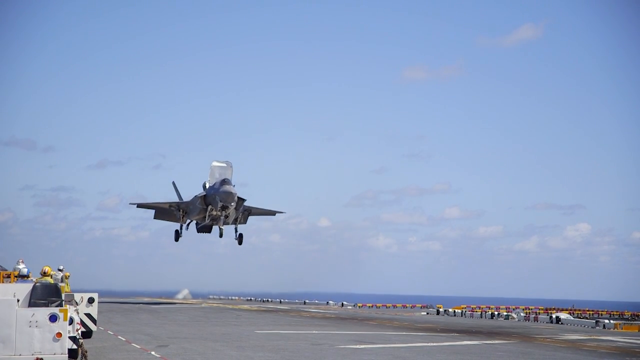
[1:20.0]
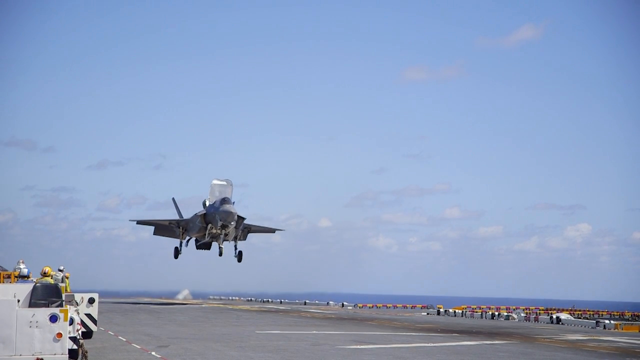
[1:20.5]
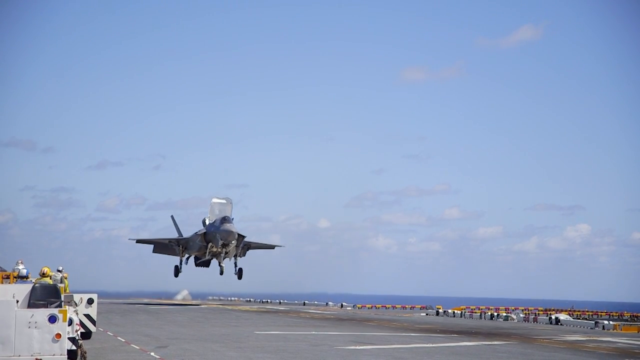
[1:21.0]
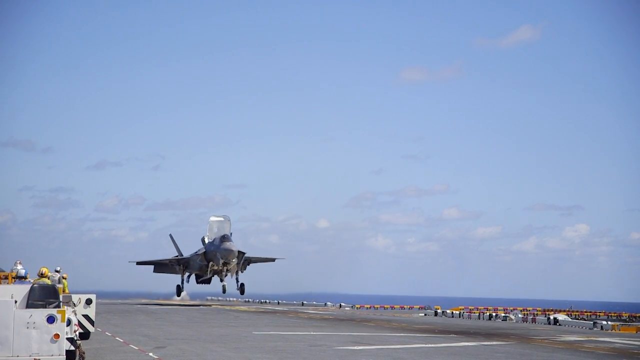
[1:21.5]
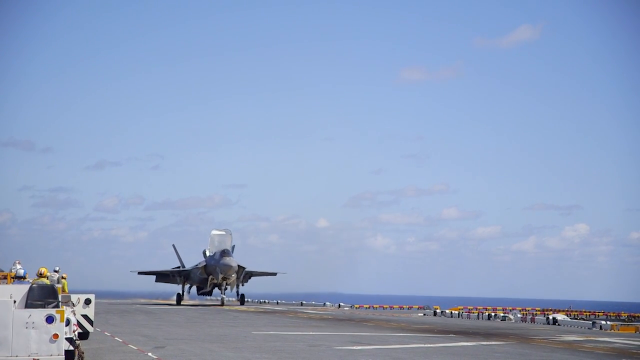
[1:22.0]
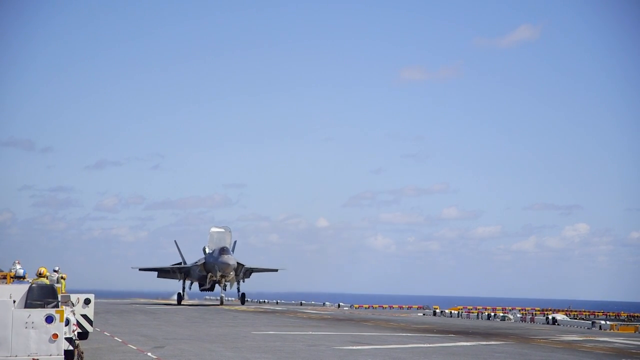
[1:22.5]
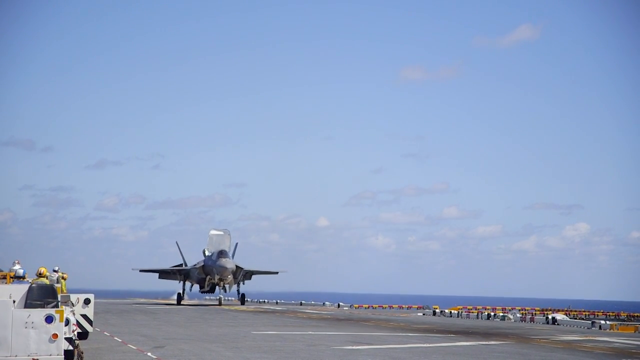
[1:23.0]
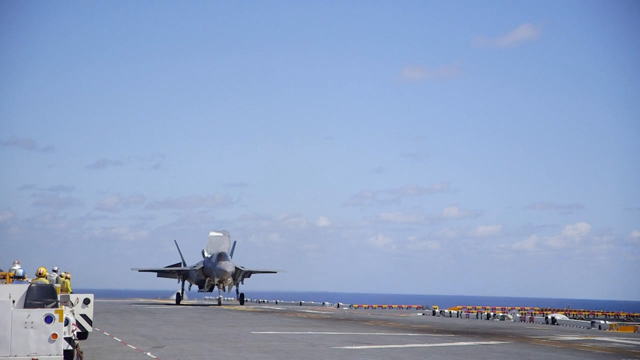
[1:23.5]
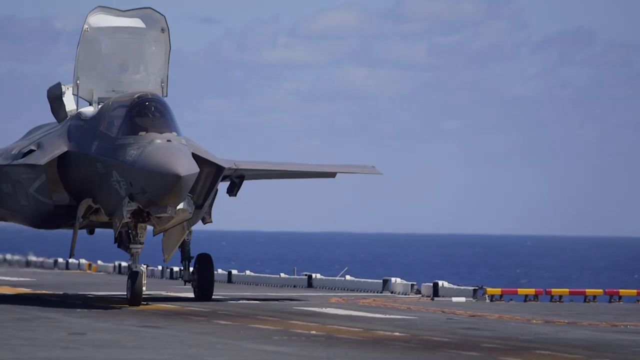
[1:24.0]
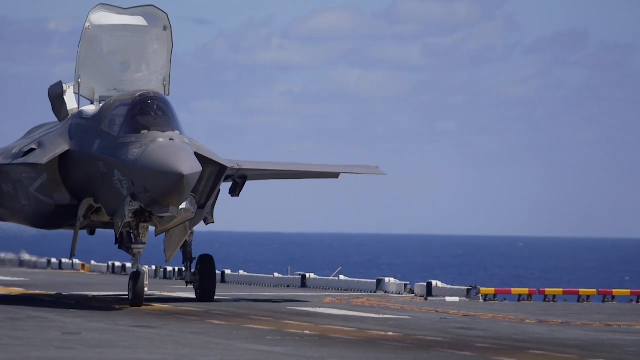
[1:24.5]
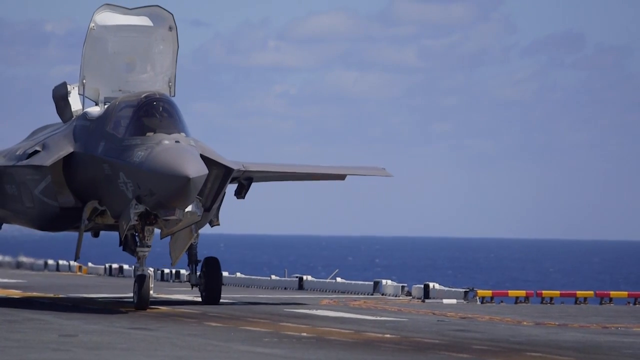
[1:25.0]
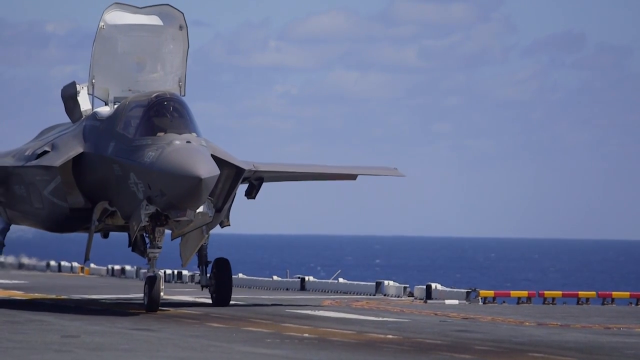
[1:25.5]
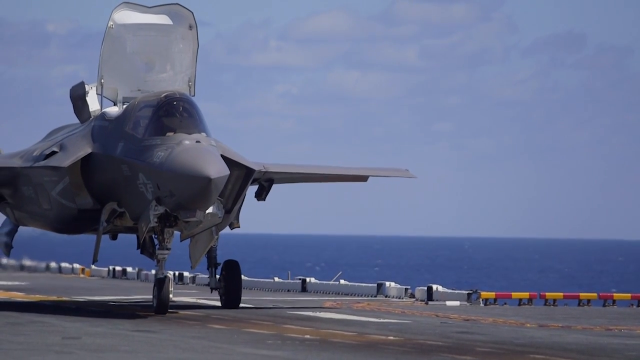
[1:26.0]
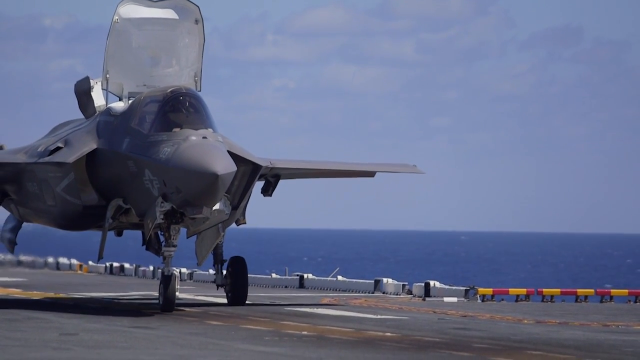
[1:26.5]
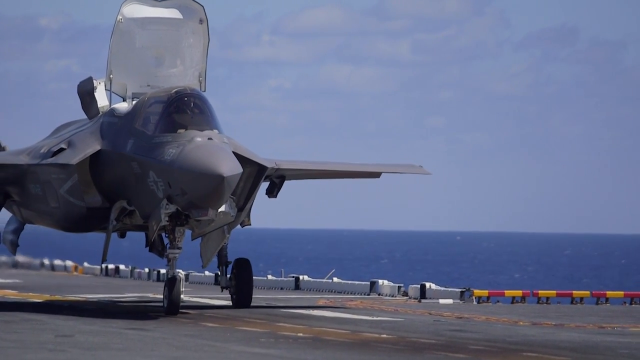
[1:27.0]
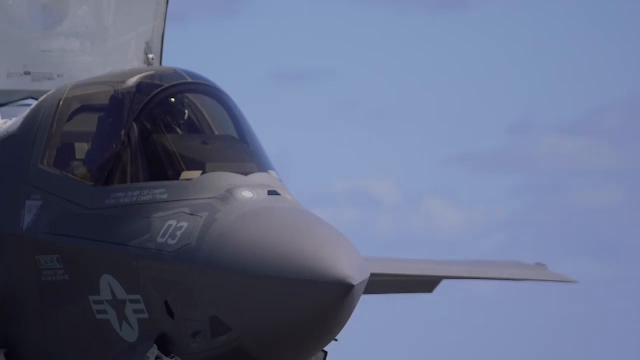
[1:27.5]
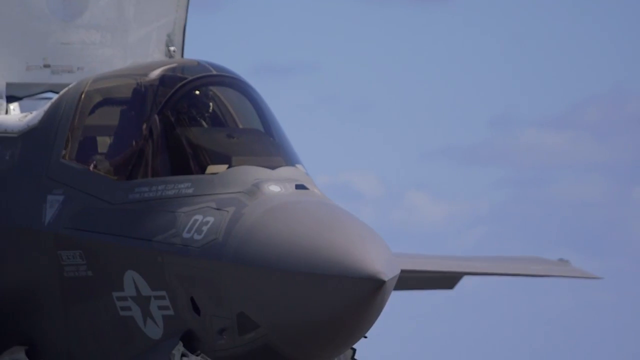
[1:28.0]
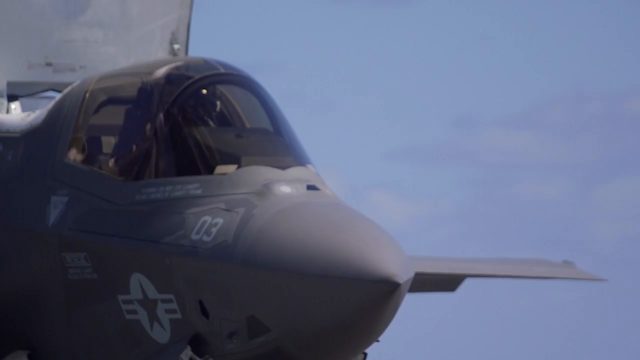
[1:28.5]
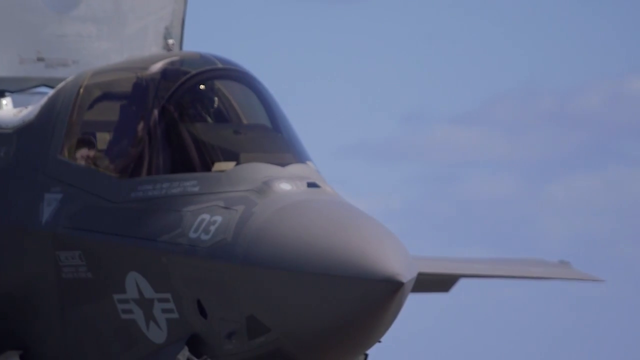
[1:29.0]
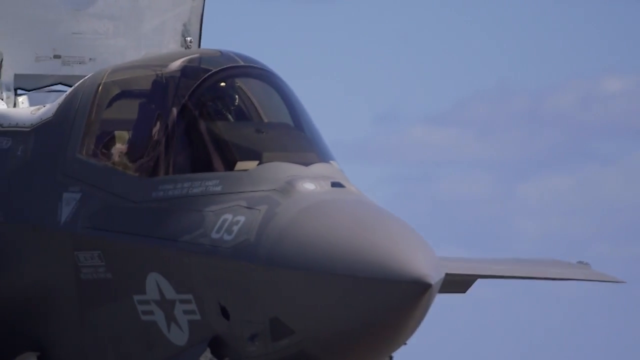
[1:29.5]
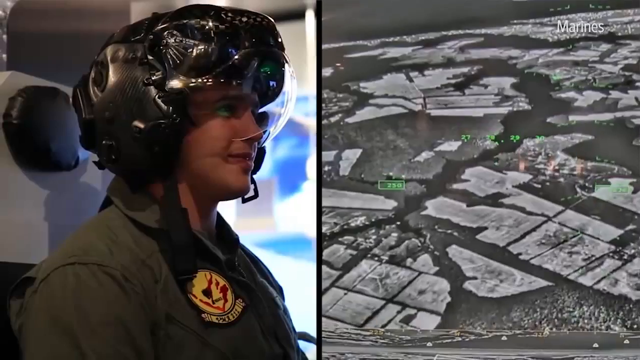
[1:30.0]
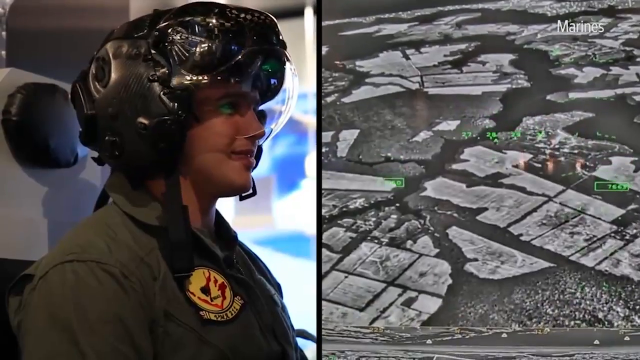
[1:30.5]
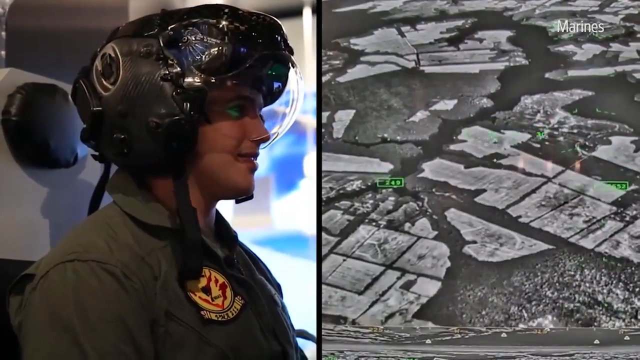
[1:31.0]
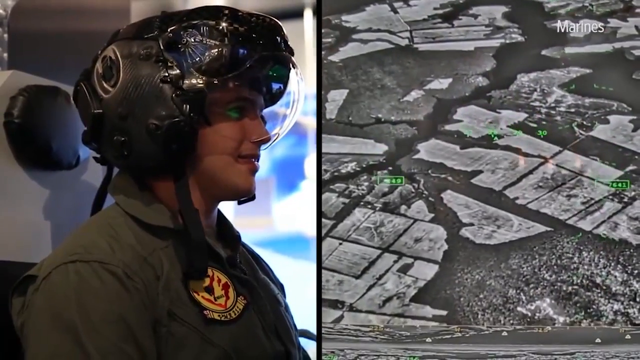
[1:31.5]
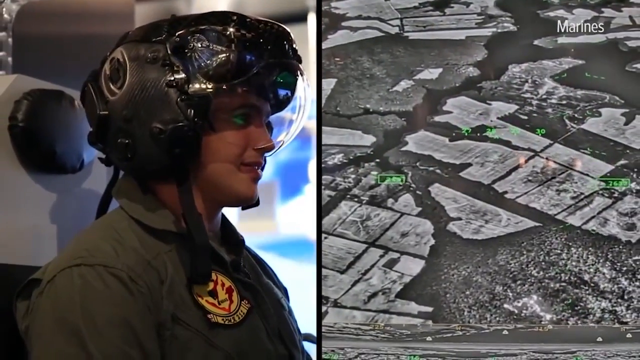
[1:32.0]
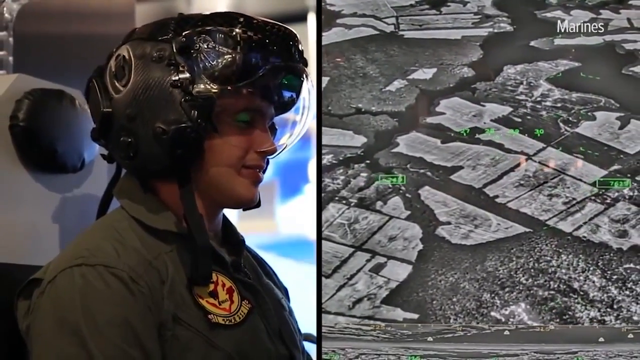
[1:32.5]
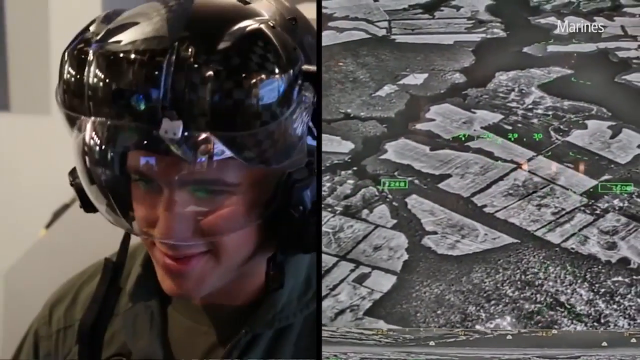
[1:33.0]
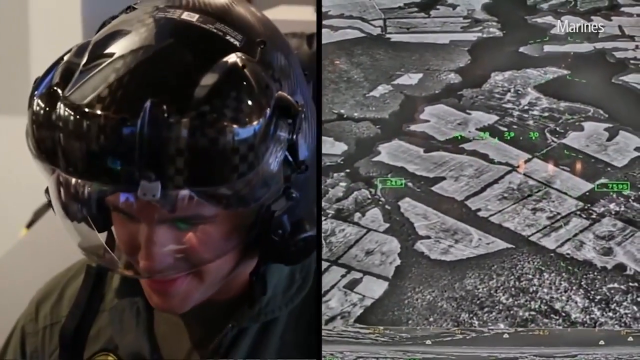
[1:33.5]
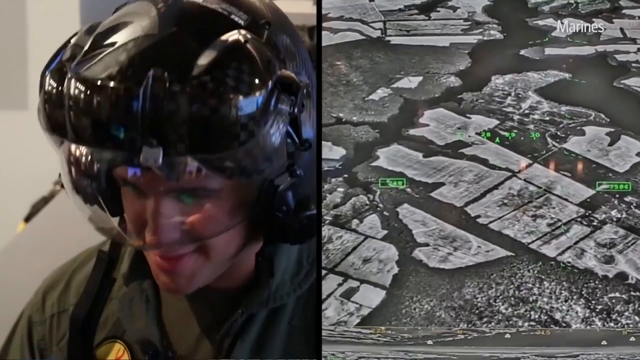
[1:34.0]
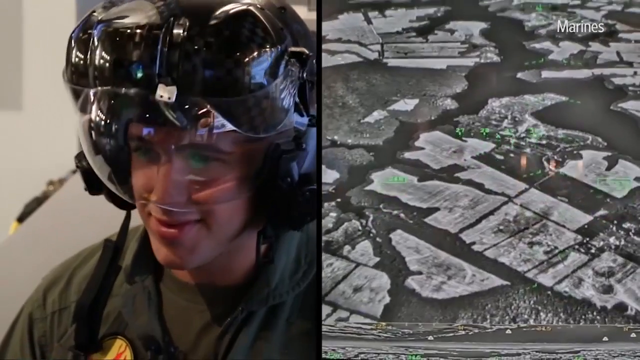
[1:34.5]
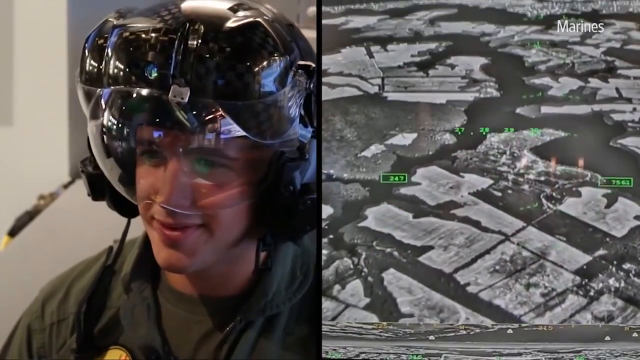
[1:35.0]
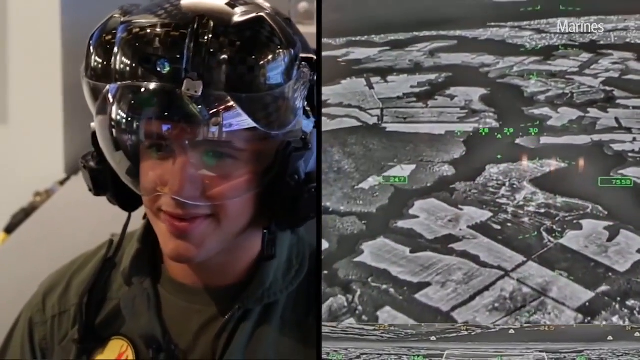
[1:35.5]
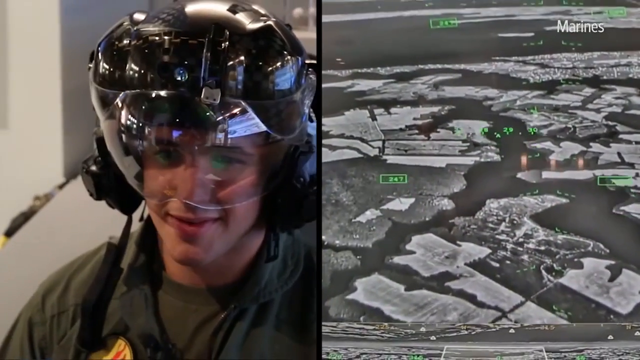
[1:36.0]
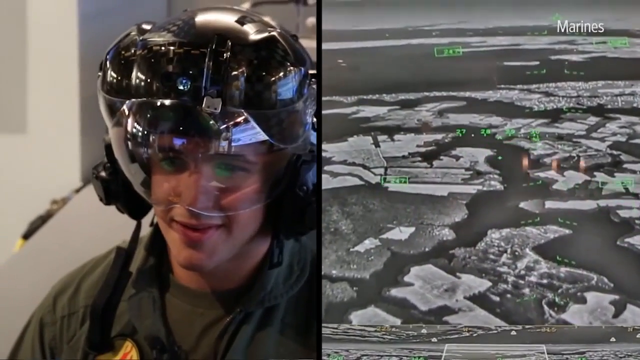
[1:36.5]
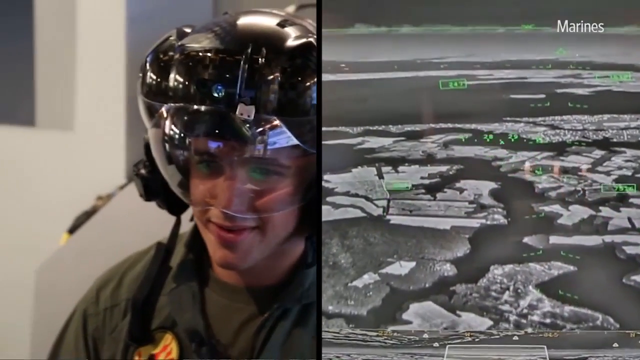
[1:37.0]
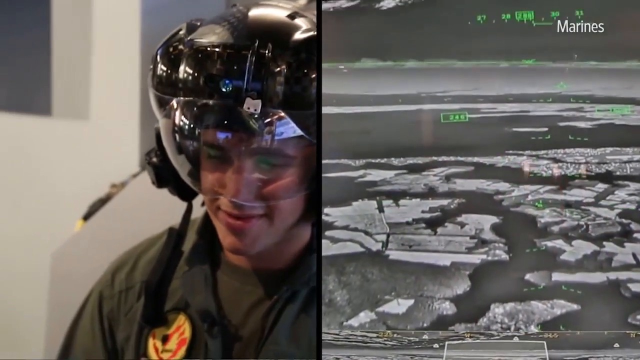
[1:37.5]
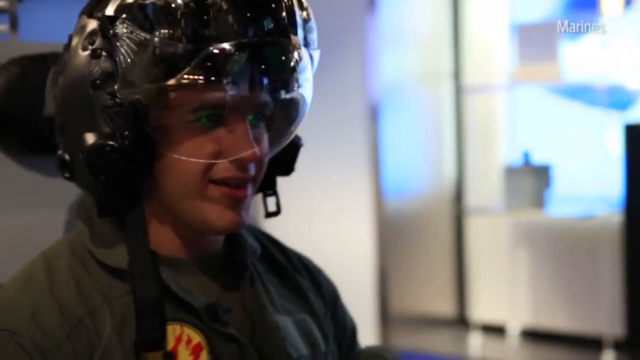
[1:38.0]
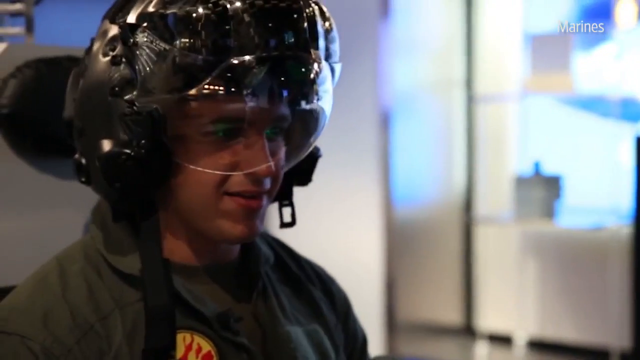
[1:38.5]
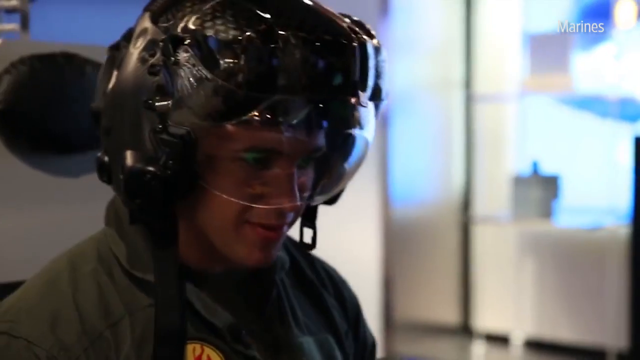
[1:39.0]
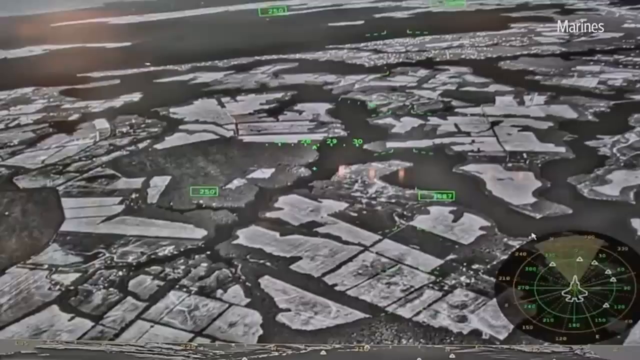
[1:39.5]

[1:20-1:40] The jet slowly drops down and lands on the runway, the flight deck of the carrier. A closer view from a different angle shows the jet on the left side slowly rolling forward, followed by a closer view of the pilot in the cockpit. A split image appears: on the left is a pilot wearing a black helmet with a clear visor covering the eyes and upper face, and on the right is some sort of map or lower terrain in a black-and-white image that looks like a night vision view. The pilot appears to be performing a simulation rather than actually flying a jet.